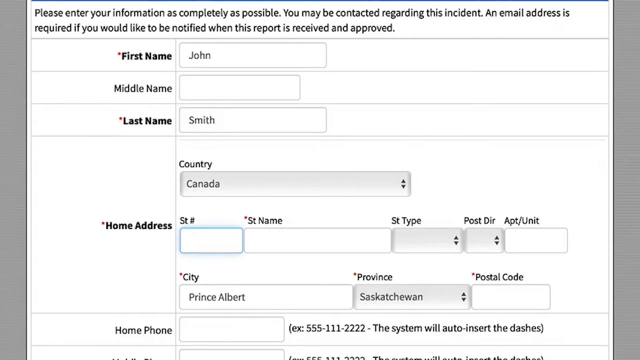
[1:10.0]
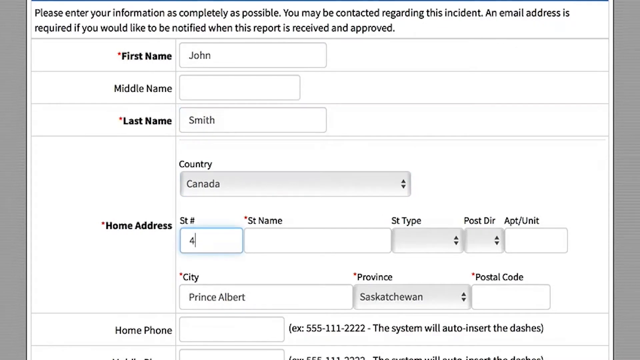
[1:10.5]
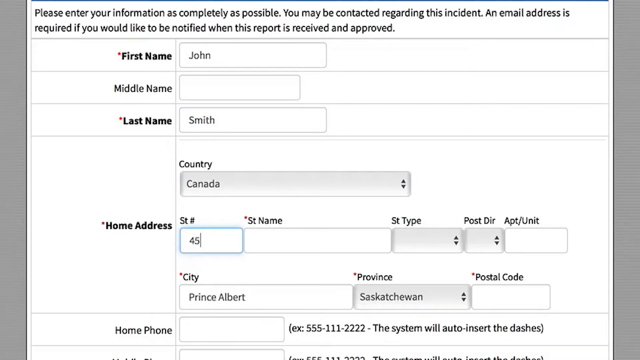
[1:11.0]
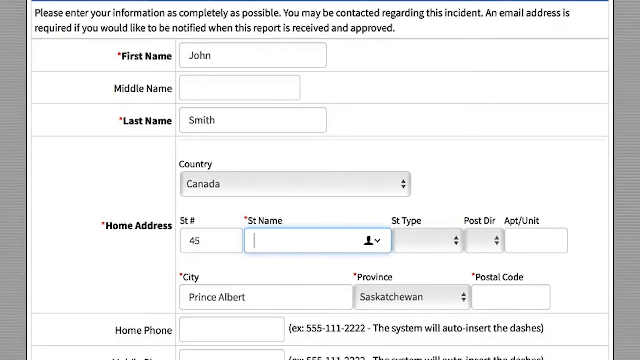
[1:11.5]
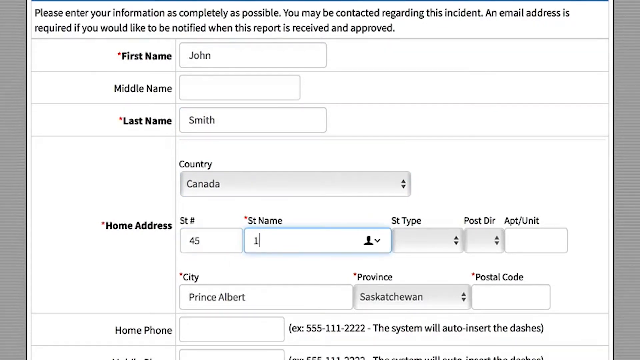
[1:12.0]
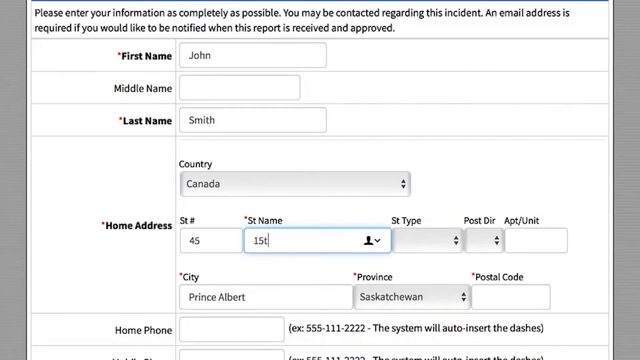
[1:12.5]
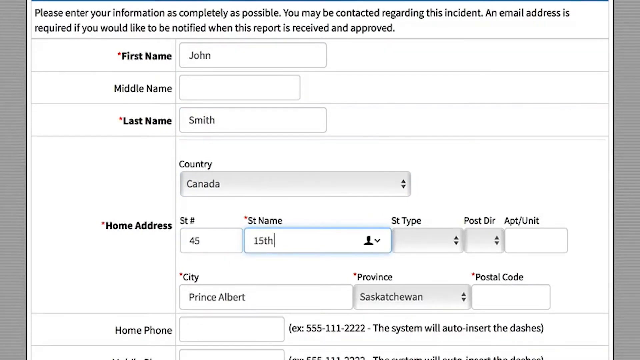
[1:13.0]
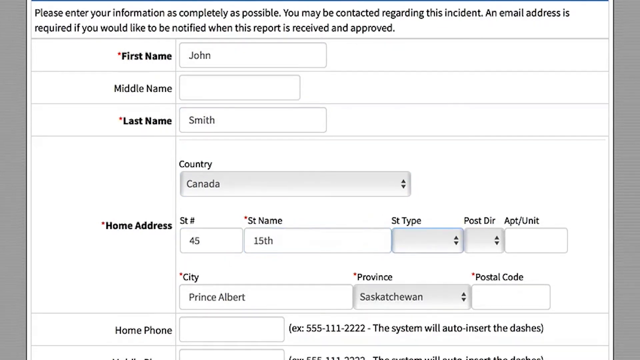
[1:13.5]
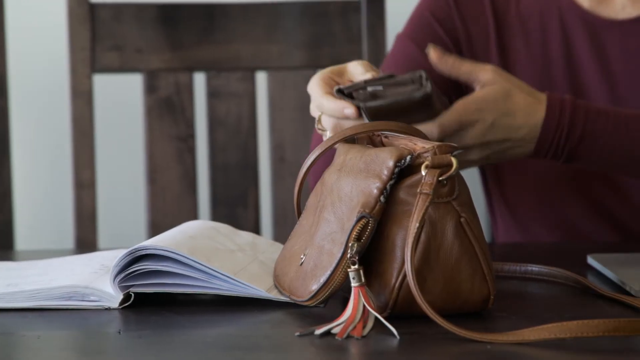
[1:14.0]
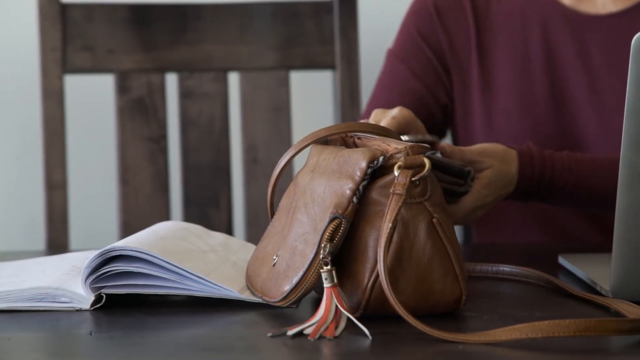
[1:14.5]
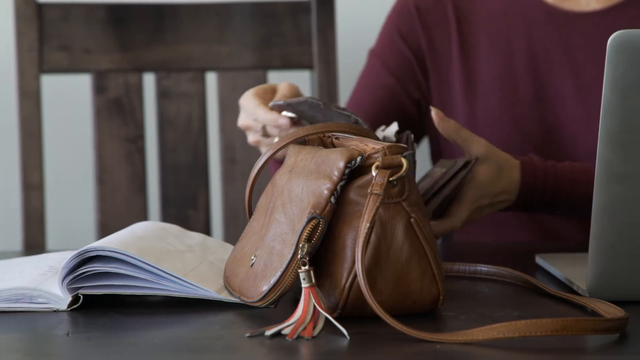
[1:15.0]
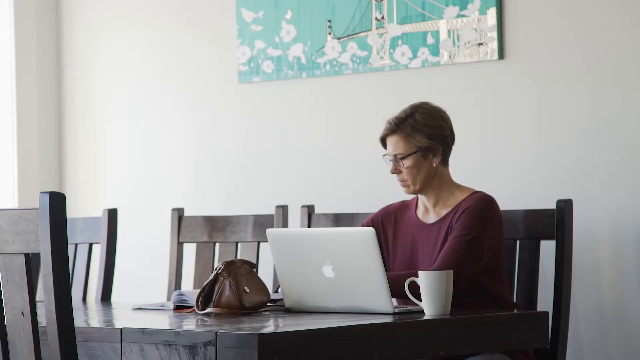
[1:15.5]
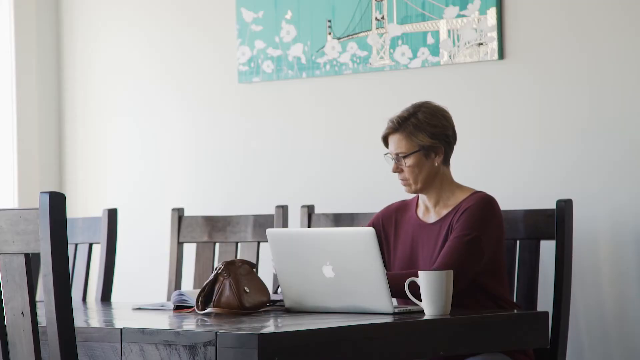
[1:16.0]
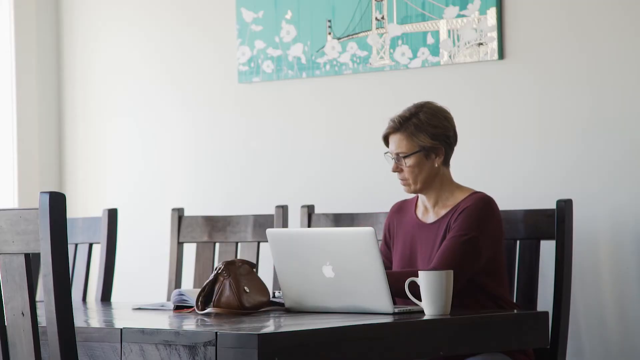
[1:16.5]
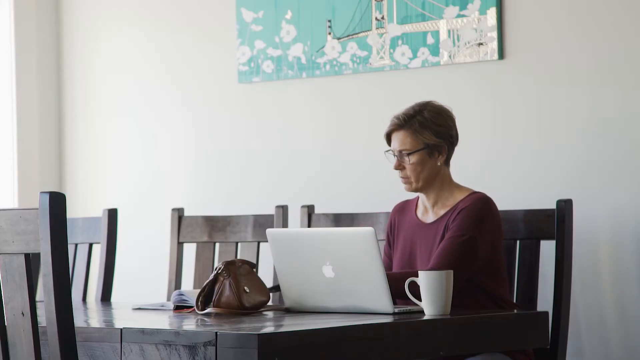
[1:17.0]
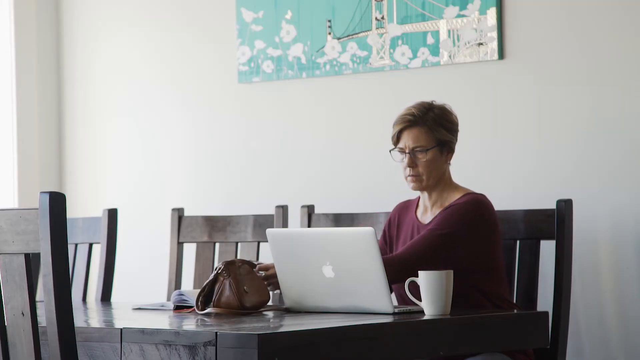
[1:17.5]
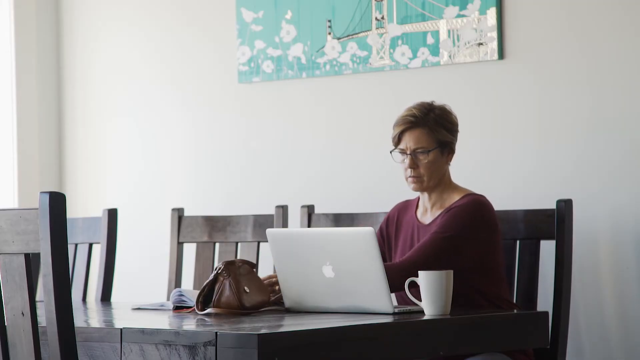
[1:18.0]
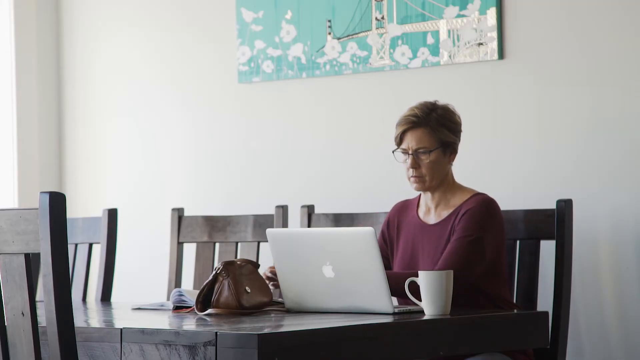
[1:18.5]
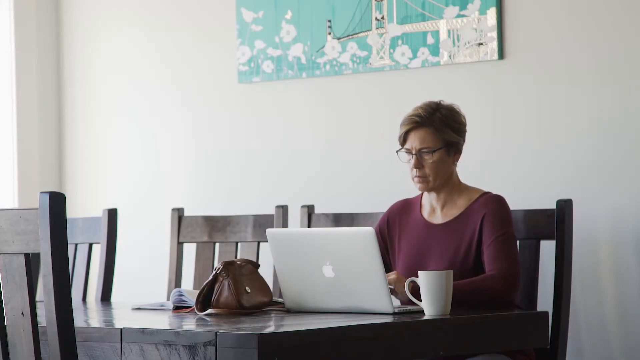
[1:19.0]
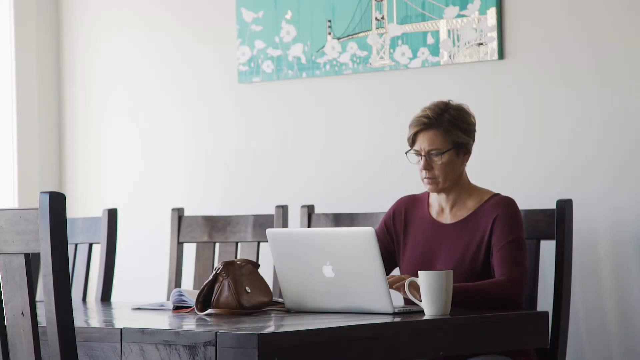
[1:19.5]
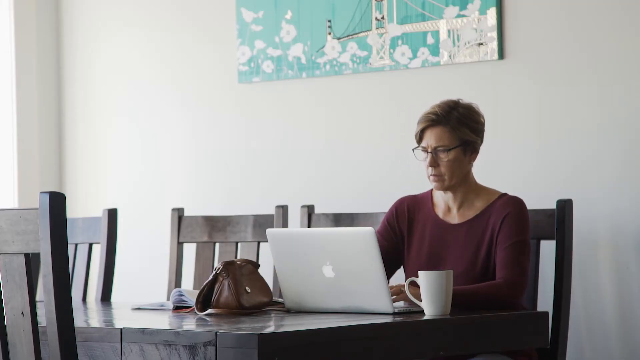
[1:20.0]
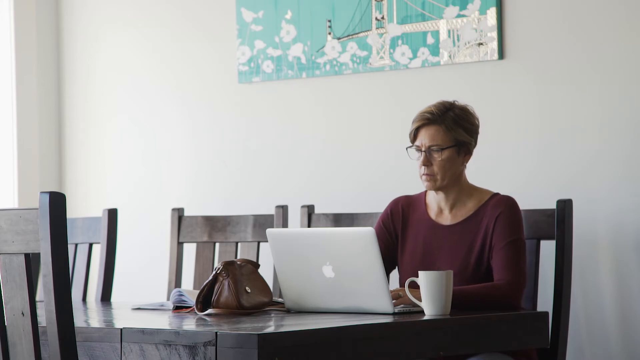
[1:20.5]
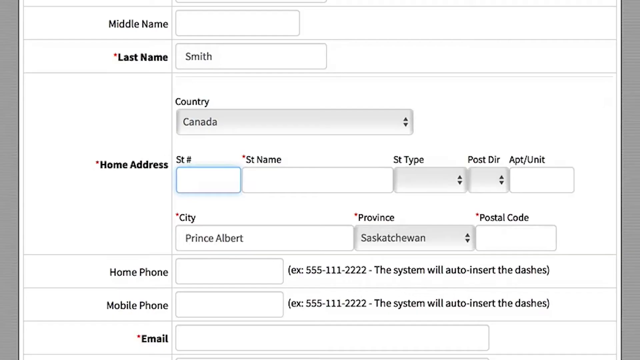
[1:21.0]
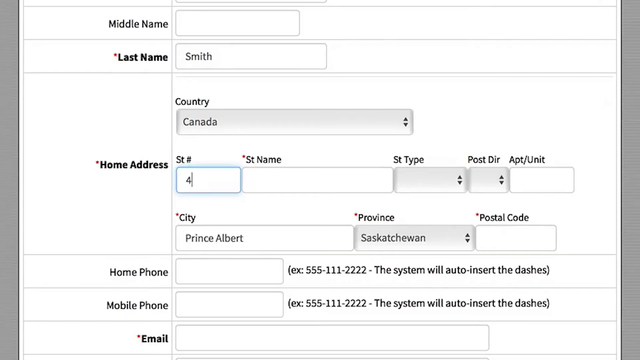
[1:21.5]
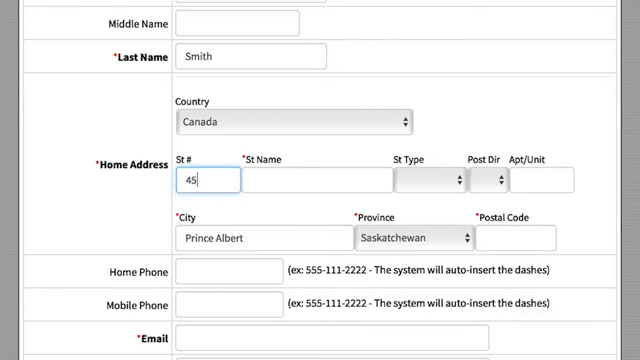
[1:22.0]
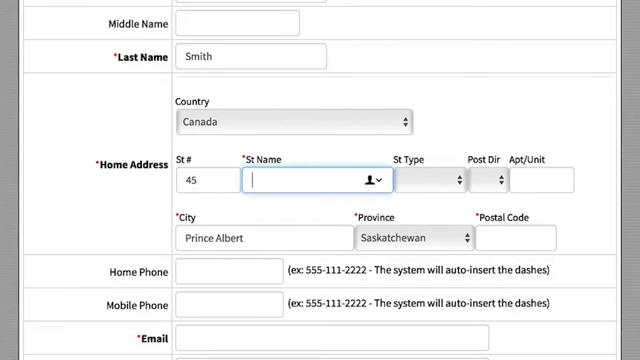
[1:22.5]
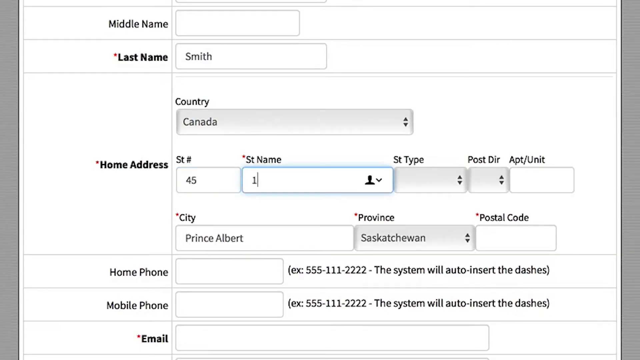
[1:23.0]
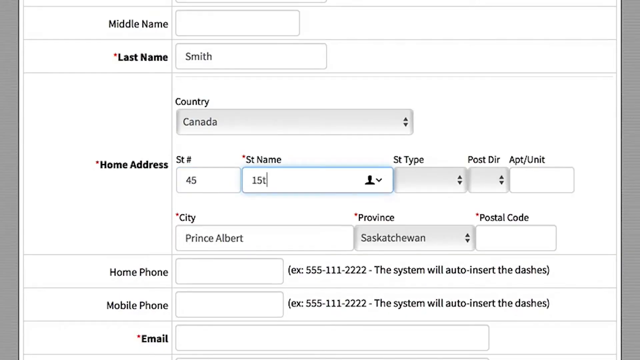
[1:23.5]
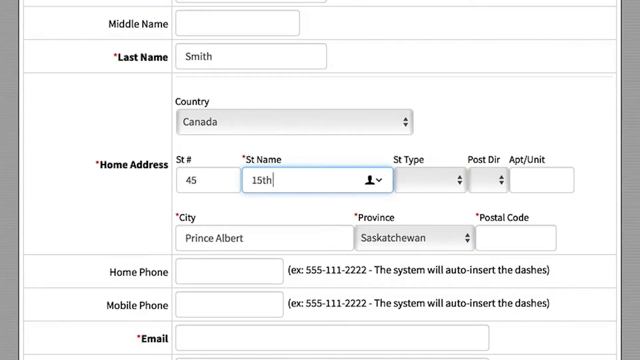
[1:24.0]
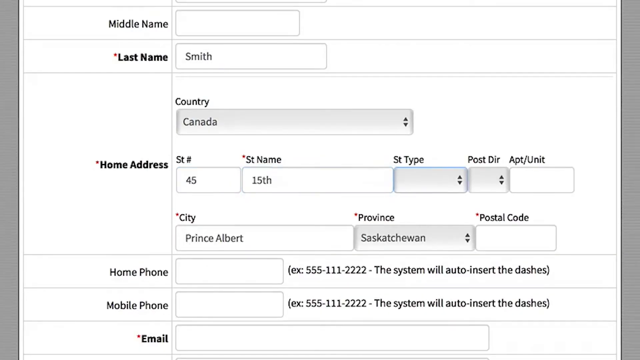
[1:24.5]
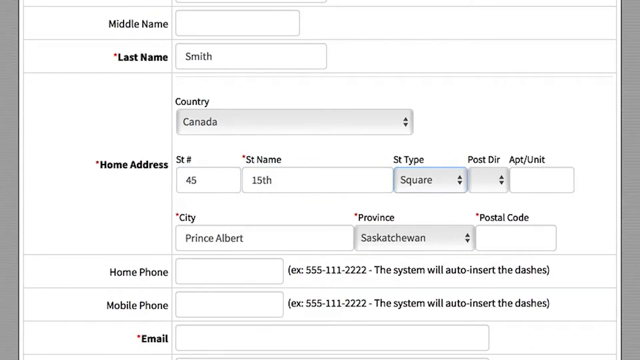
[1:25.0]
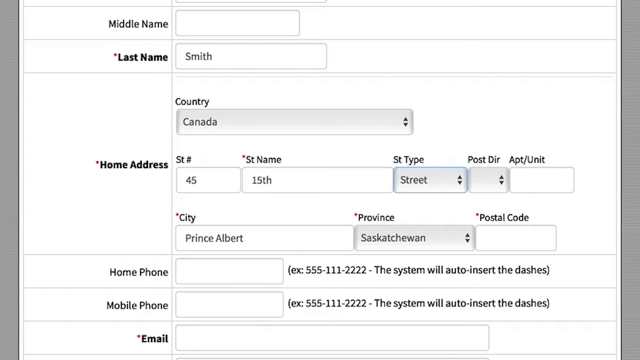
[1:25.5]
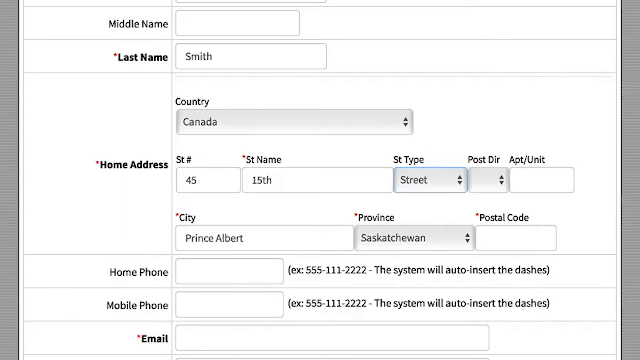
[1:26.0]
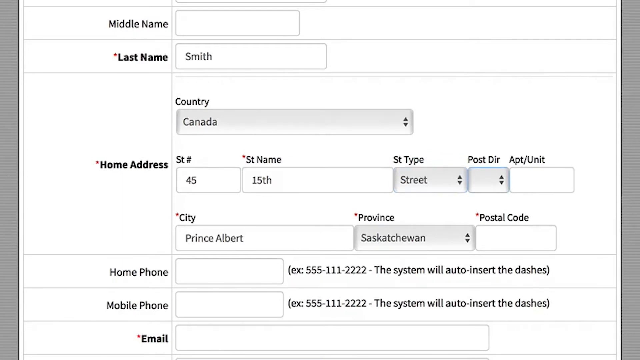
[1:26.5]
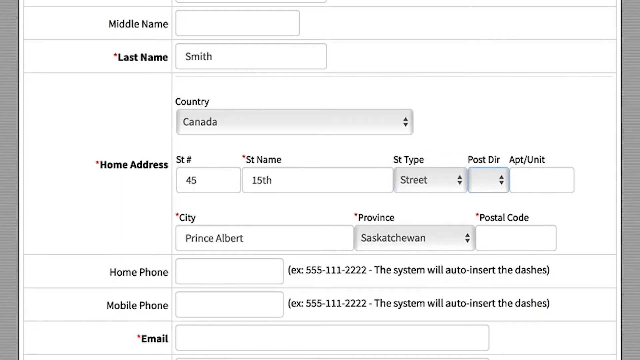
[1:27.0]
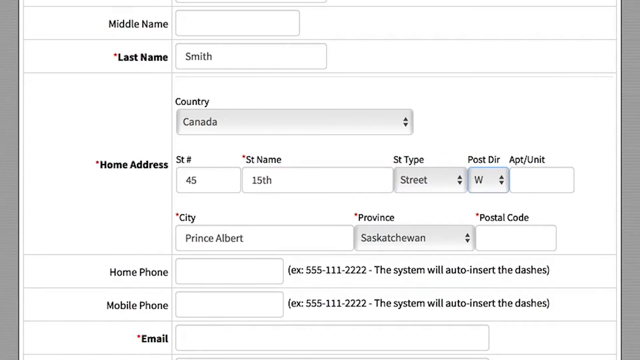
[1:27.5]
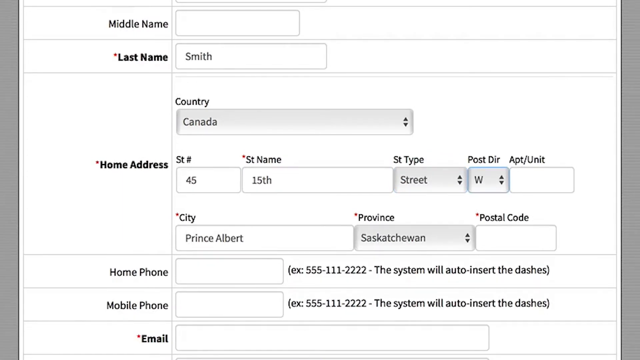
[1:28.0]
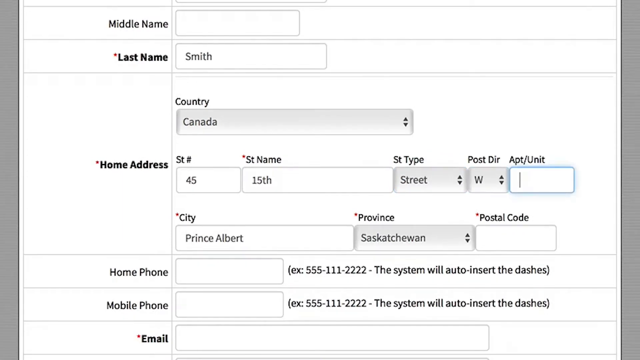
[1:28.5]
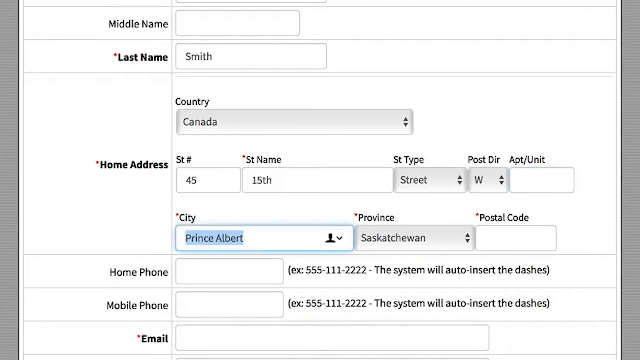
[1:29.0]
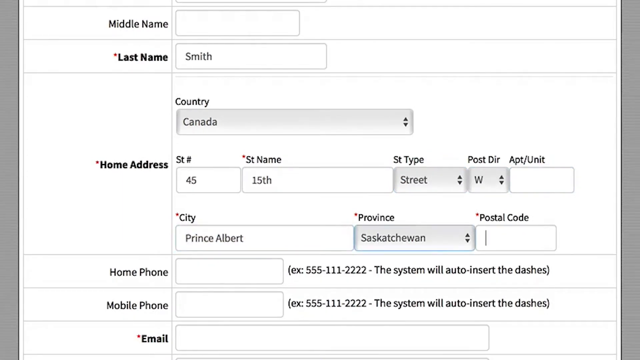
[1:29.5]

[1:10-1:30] Text on screen reads "please enter information as completely as possible. You may be contacted regarding this incident. An email address is required if you would like to be notified when this report is received and approved." Fields include first name, middle name and last name. The woman seen earlier appears with a laptop, a bag and a cup of drink, filling in the form to report an incident. The street name is filled in as "15th", the street type as "street" and the city as Prince Albert.